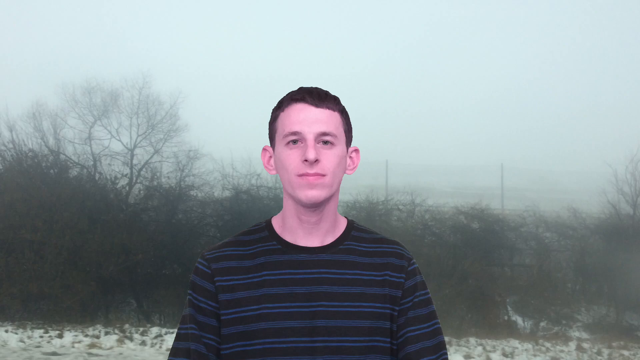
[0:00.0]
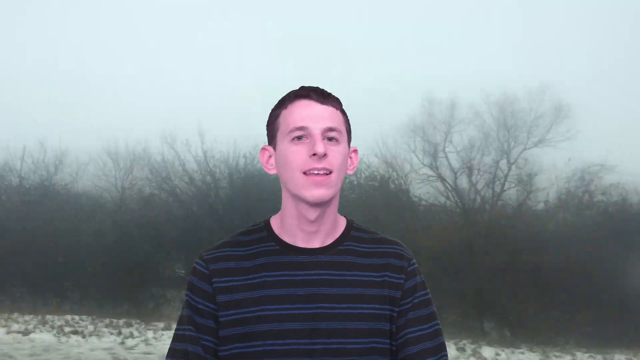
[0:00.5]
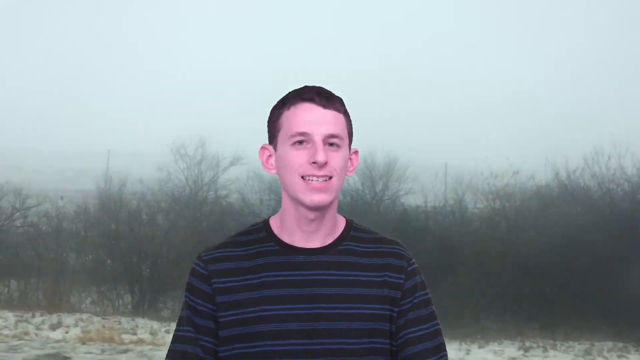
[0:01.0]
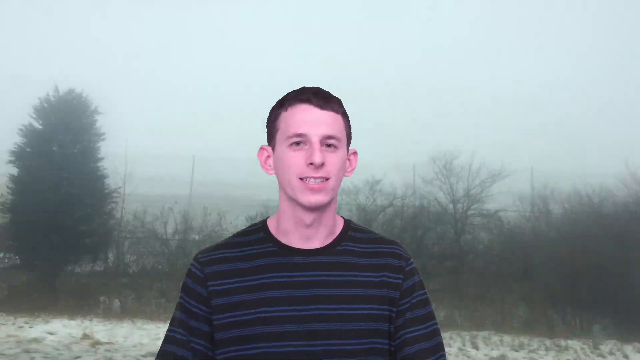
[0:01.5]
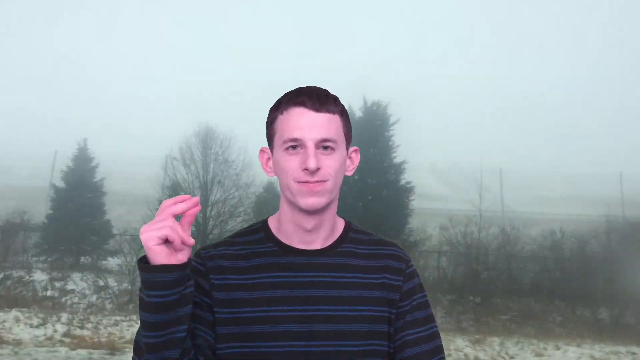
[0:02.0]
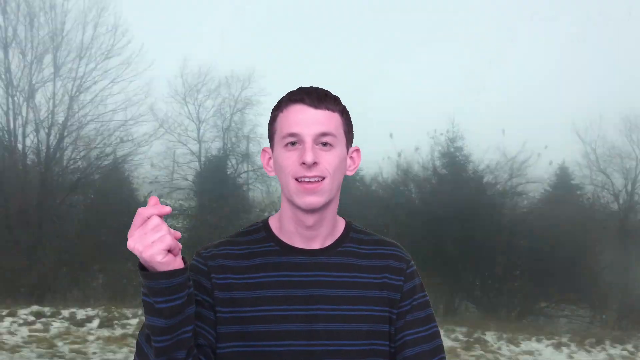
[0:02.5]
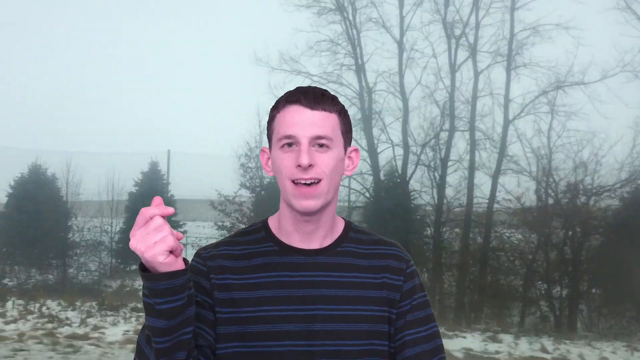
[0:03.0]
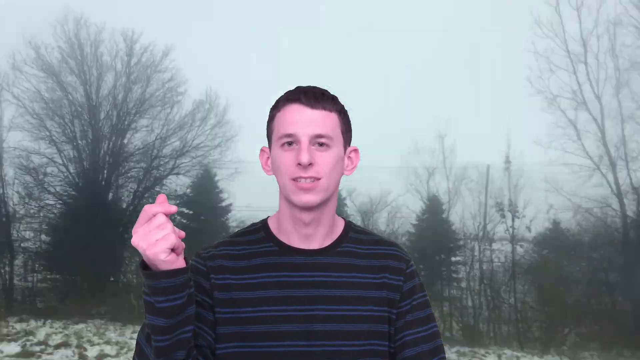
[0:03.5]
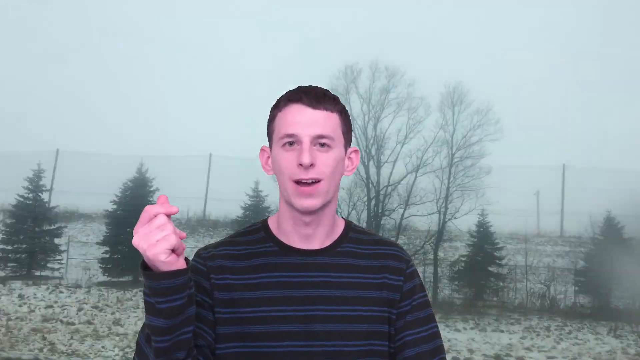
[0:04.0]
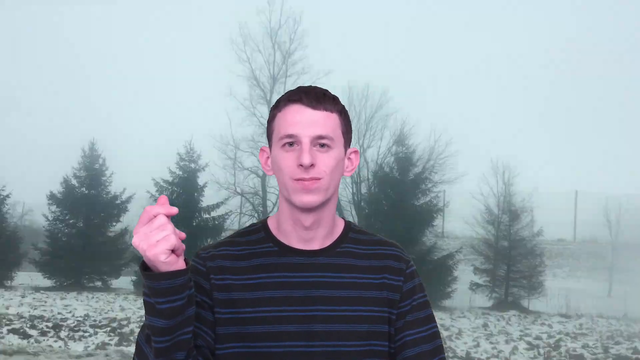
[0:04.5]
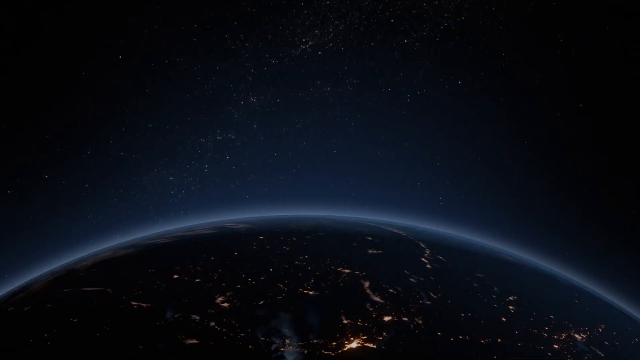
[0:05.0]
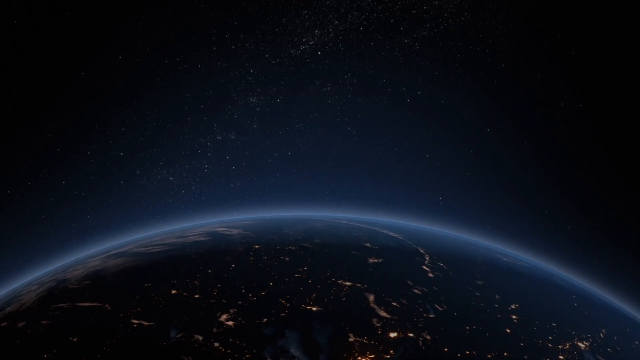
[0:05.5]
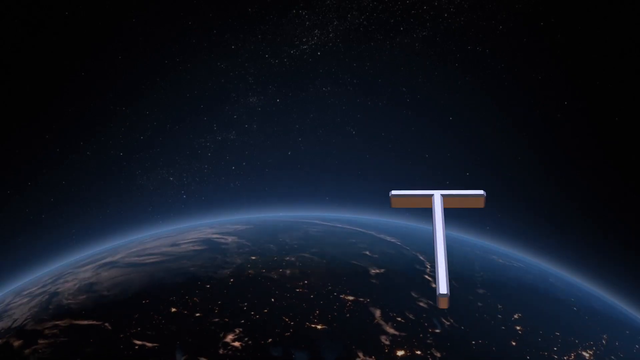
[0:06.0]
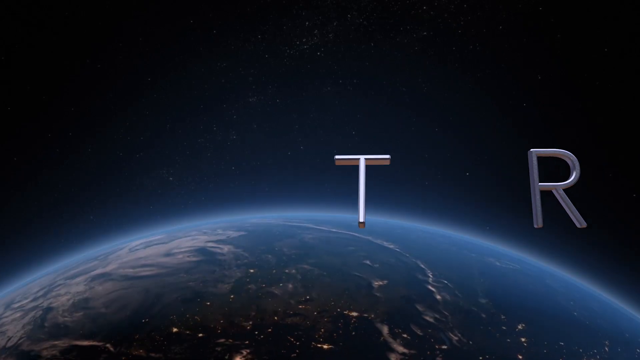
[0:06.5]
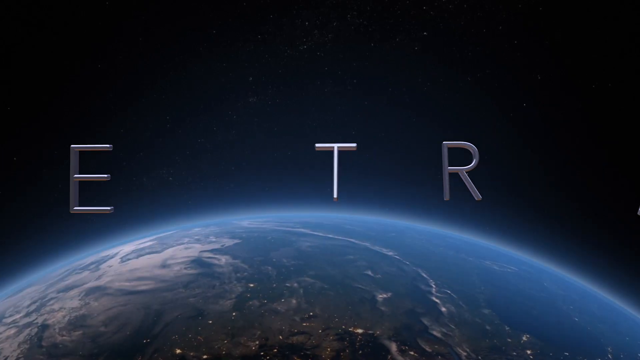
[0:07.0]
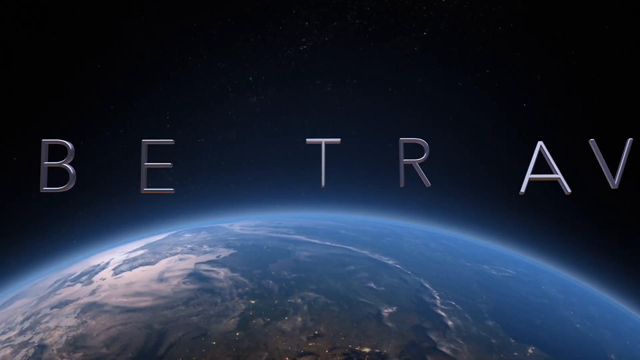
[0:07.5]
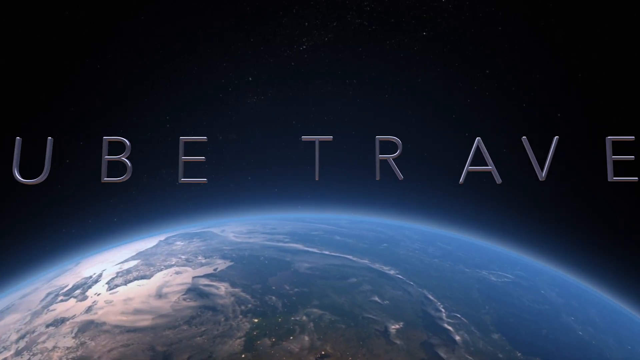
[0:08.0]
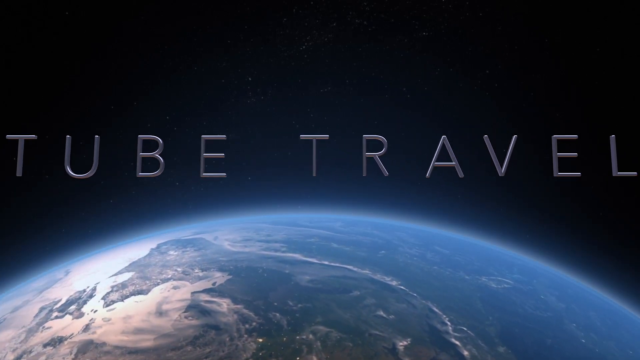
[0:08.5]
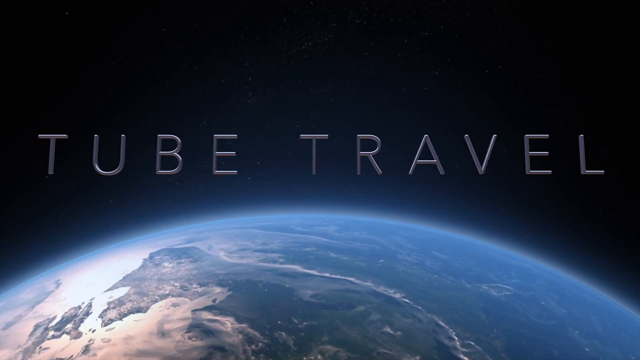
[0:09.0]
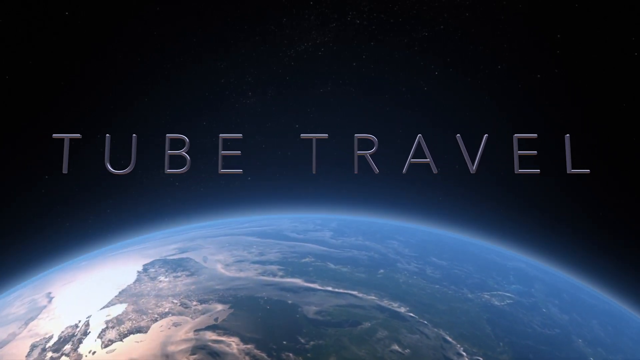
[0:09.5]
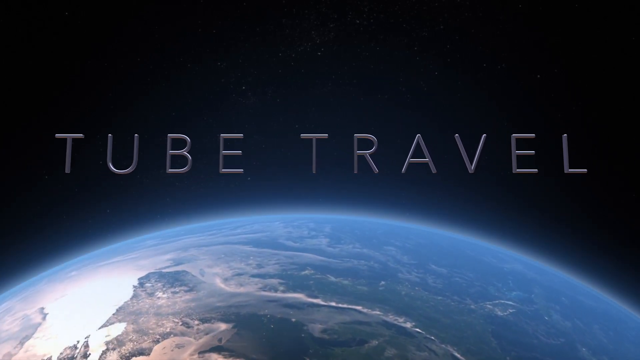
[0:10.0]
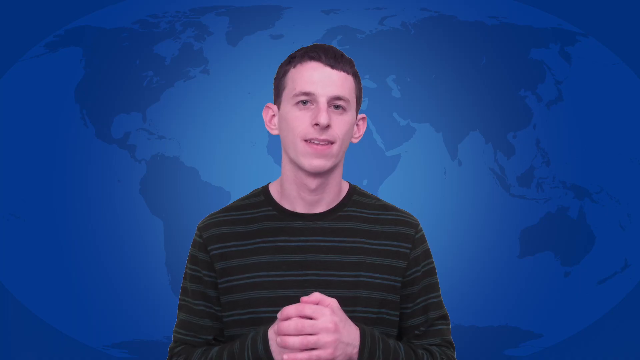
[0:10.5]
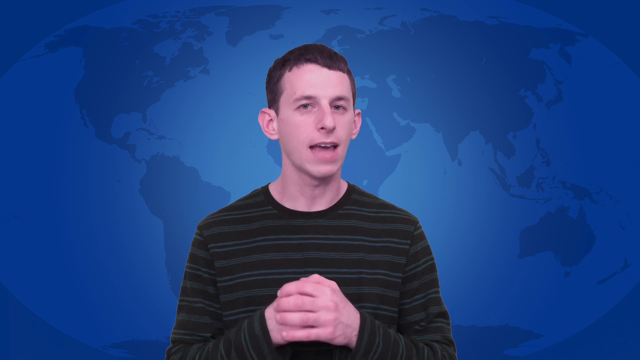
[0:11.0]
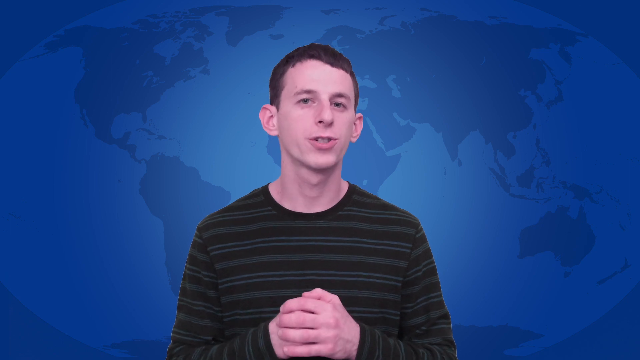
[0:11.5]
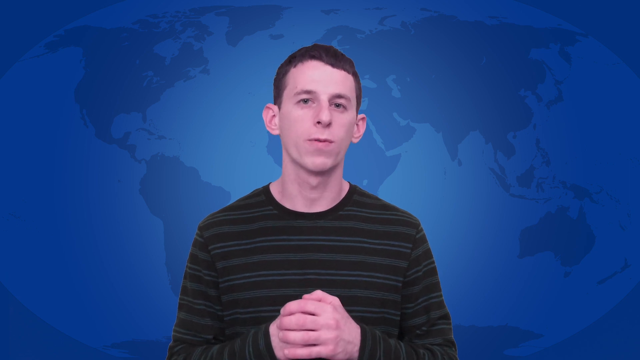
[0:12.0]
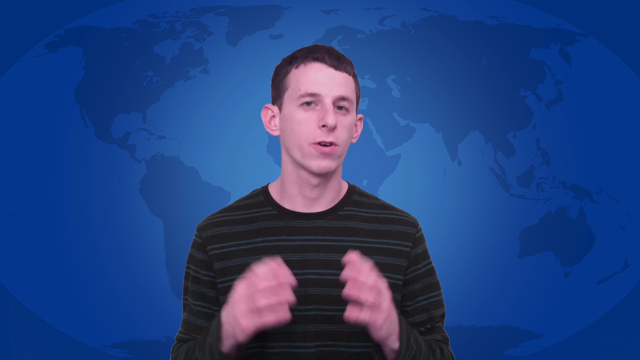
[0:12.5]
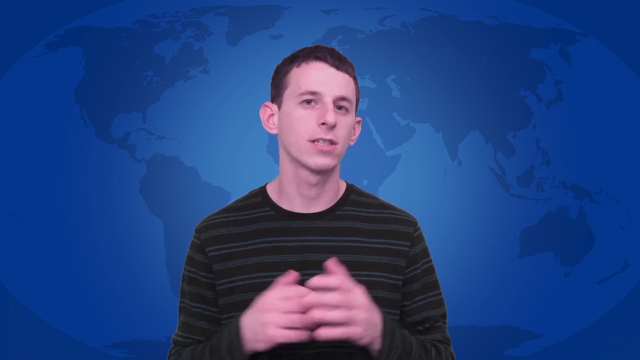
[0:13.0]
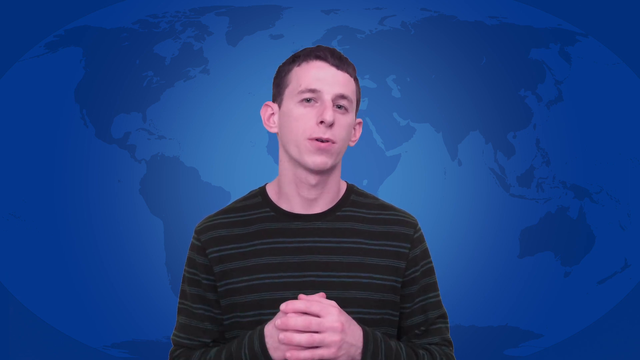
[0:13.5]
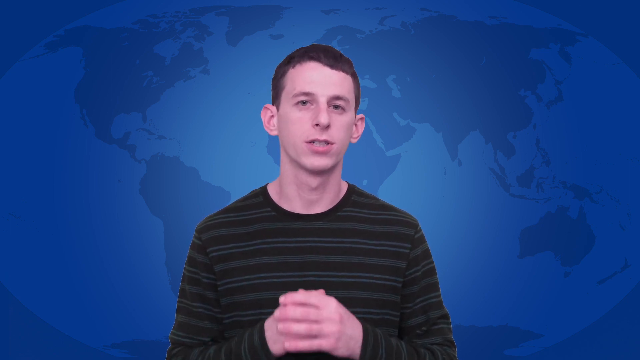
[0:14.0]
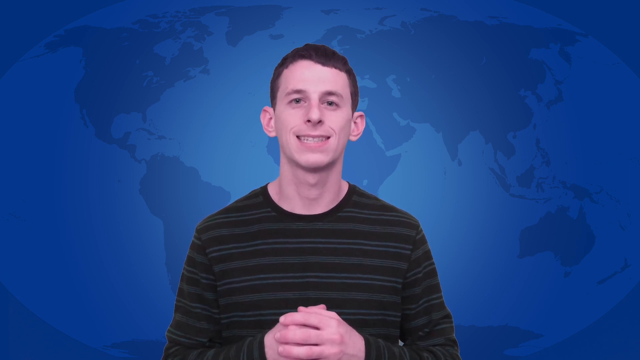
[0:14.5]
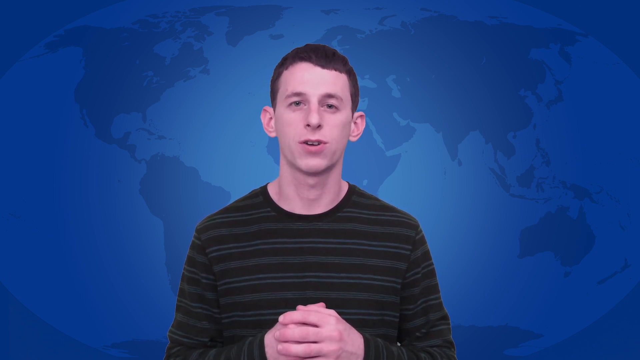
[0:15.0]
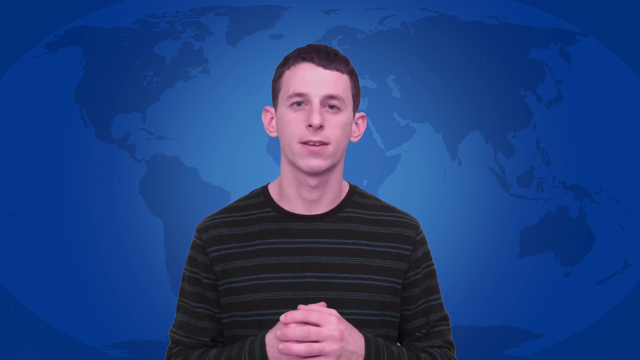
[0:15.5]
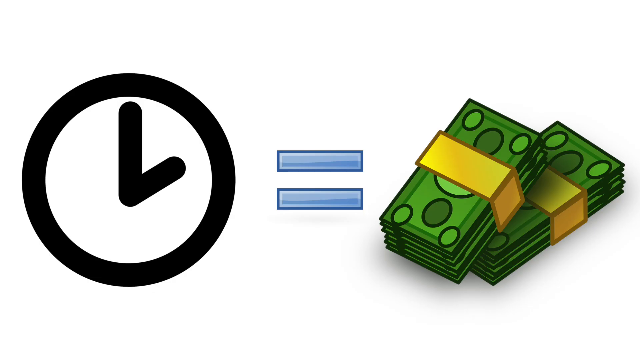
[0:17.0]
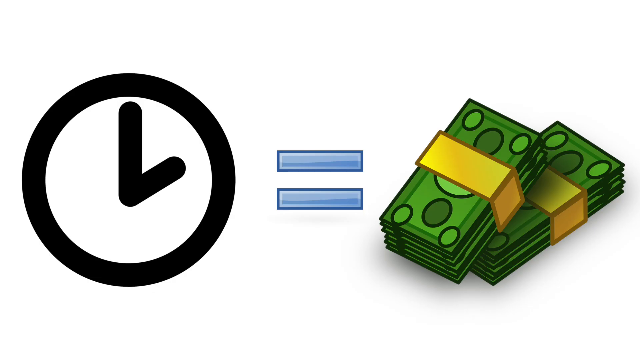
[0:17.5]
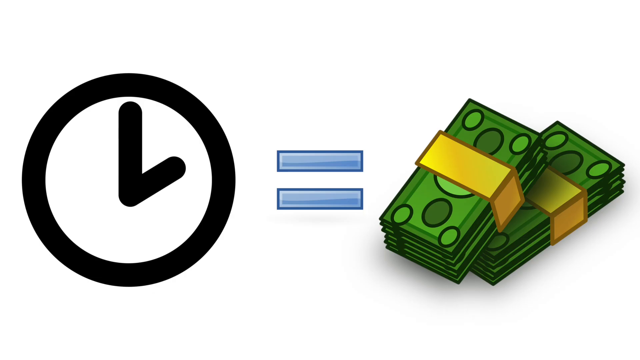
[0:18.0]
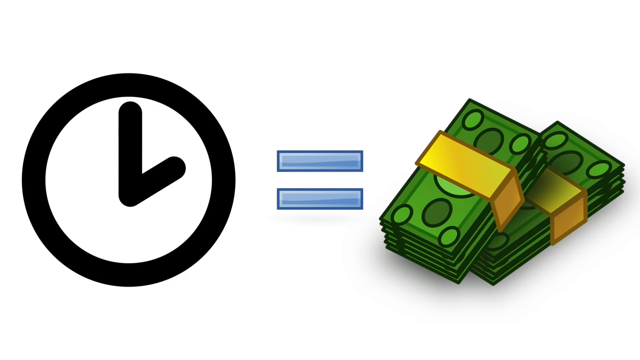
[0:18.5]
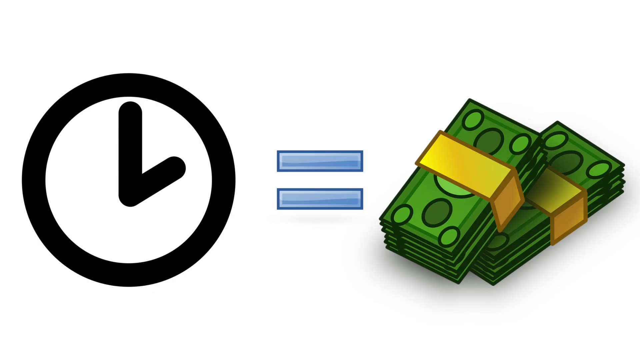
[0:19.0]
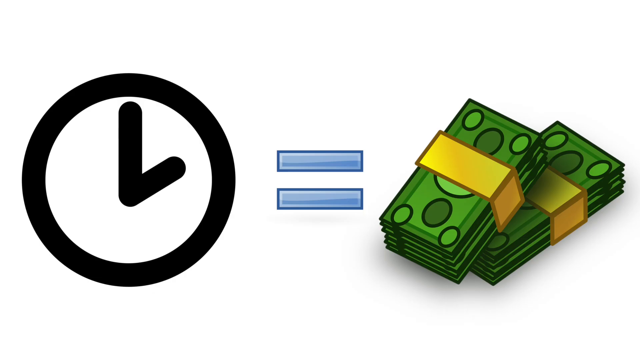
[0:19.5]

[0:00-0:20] A young white man with dark hair stares at the camera. He wears a striped shirt, and behind him is background scenery of trees; it is a little foggy, and there could be snow on the ground. The scenery spins around him while he talks. He snaps his fingers and the spinning becomes even faster, a little dizzying. A picture of the earth appears with the words "tube travel." The young man returns, now with a bluish world map behind him, all in different shades of blue so the continents and oceans can be told apart. He talks with his hands kind of folded together. Then a clock, an equals sign and money appear, showing that time equals money.